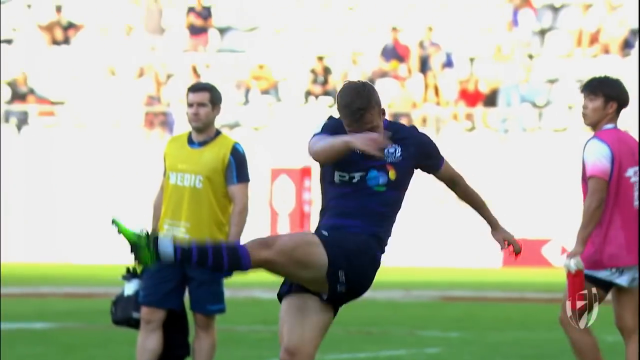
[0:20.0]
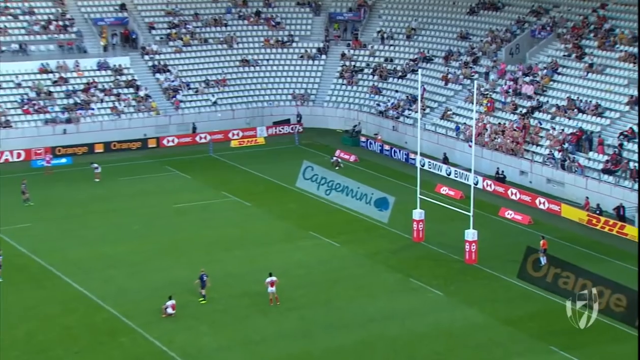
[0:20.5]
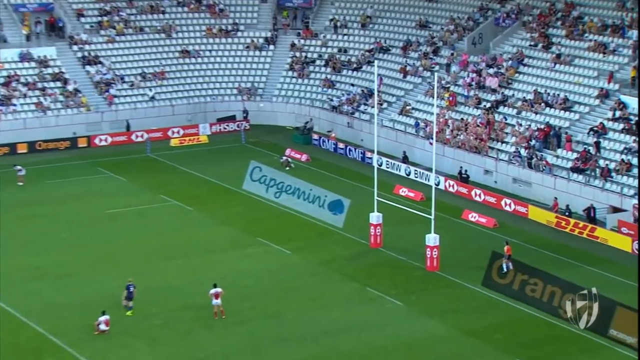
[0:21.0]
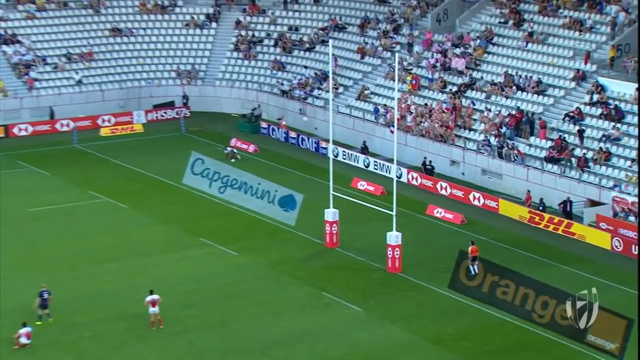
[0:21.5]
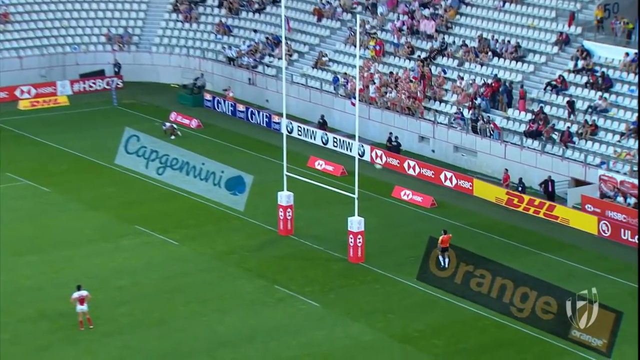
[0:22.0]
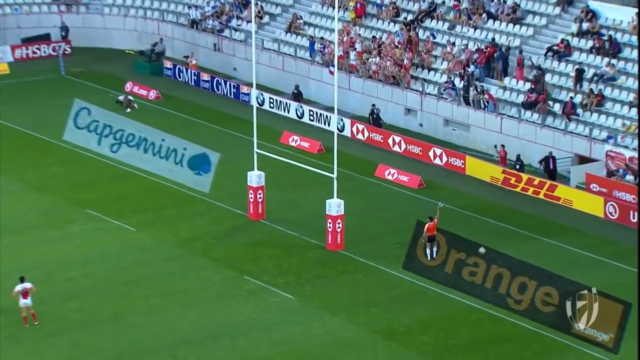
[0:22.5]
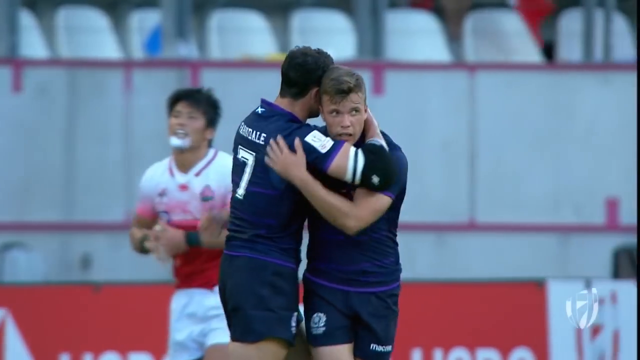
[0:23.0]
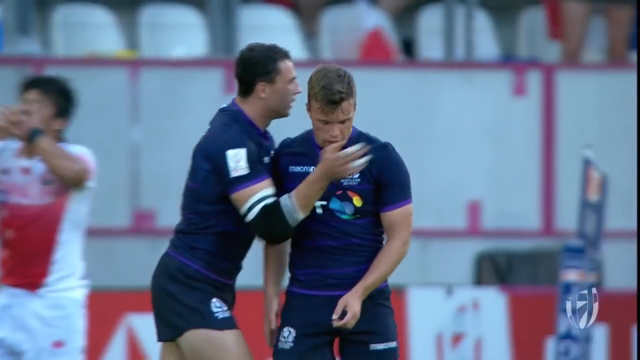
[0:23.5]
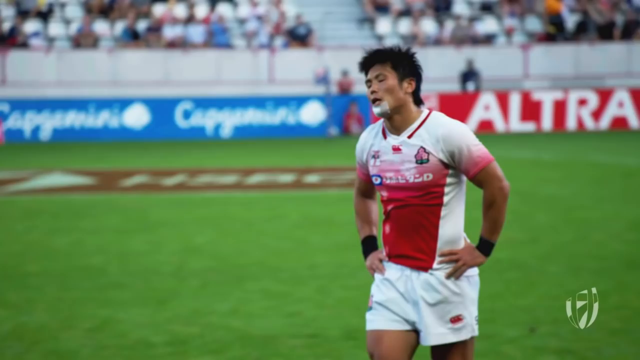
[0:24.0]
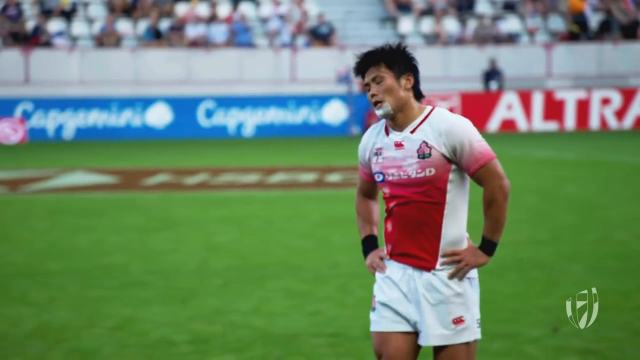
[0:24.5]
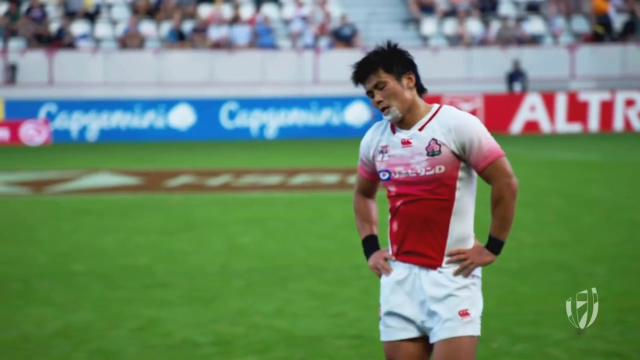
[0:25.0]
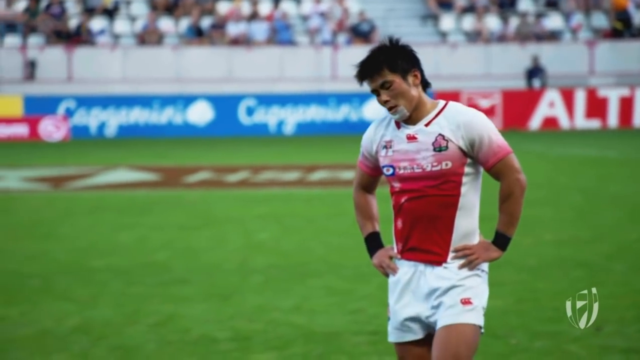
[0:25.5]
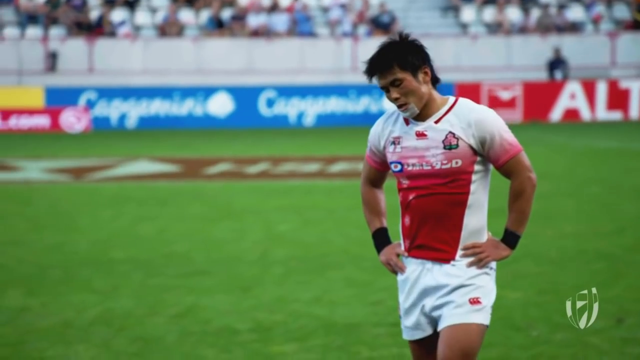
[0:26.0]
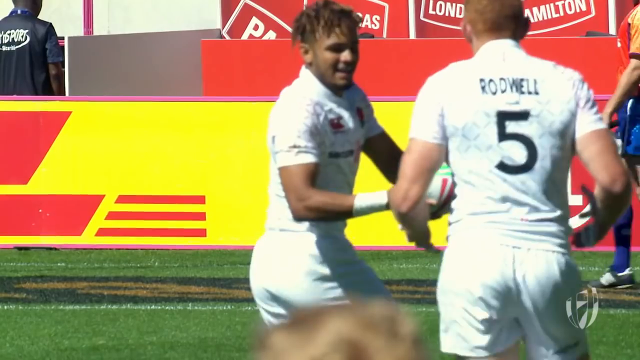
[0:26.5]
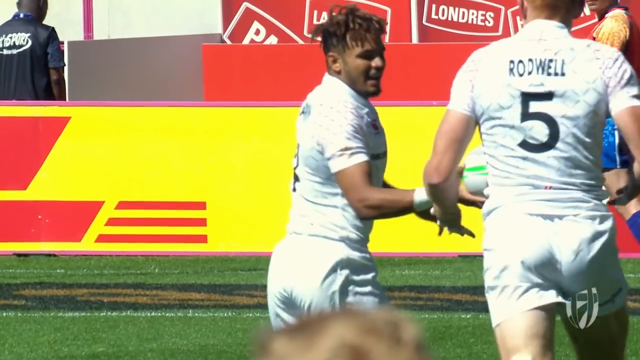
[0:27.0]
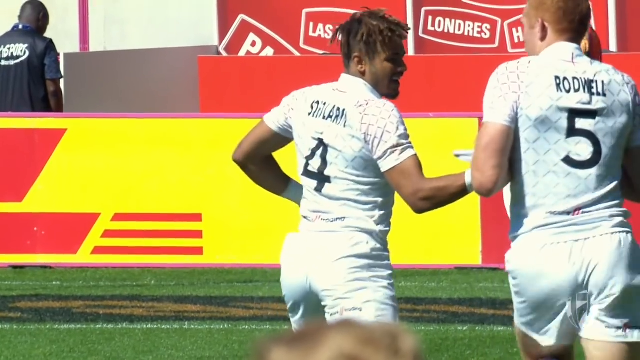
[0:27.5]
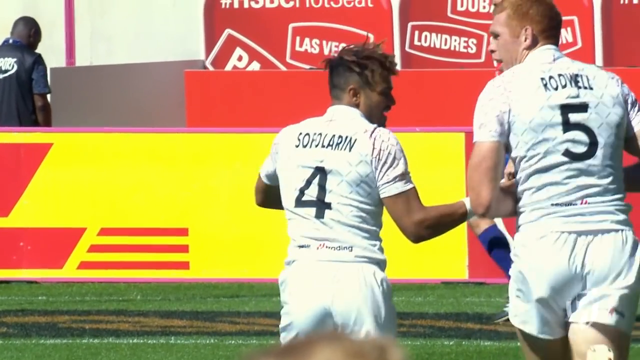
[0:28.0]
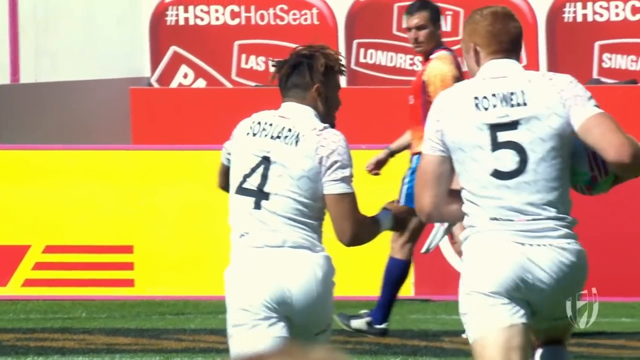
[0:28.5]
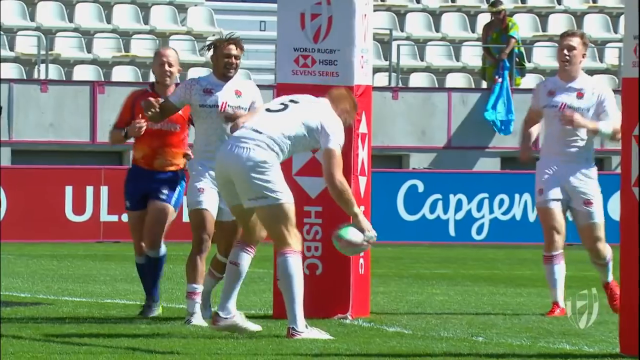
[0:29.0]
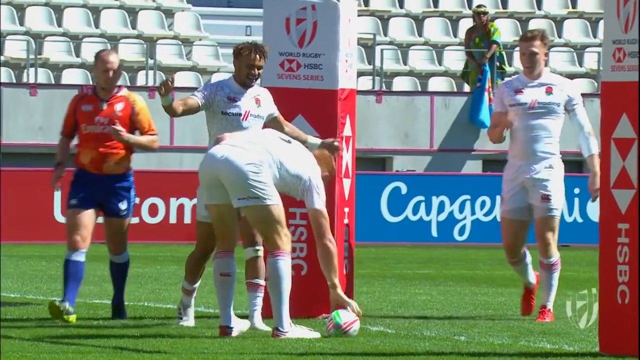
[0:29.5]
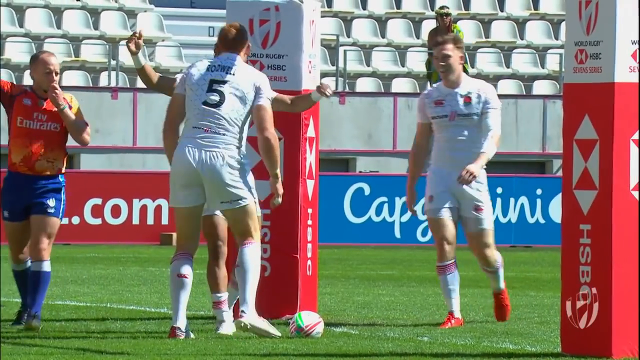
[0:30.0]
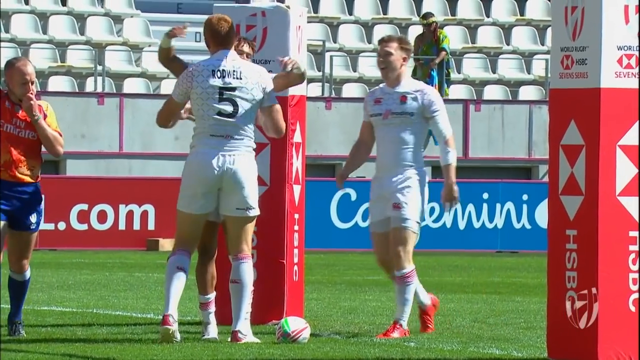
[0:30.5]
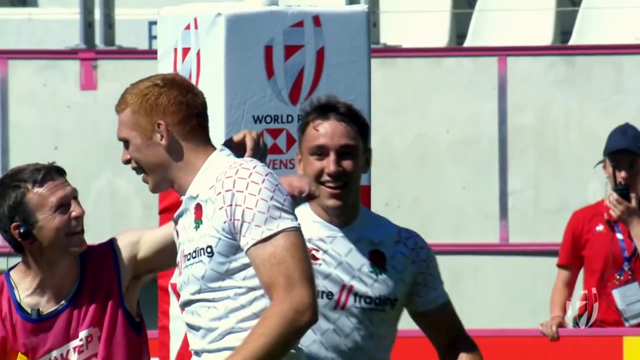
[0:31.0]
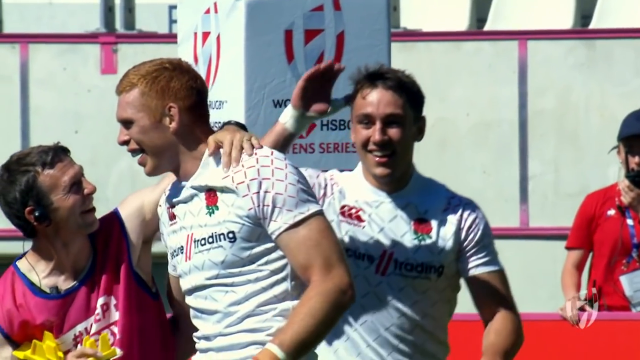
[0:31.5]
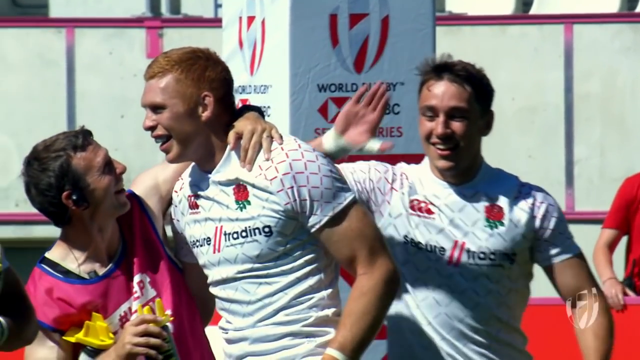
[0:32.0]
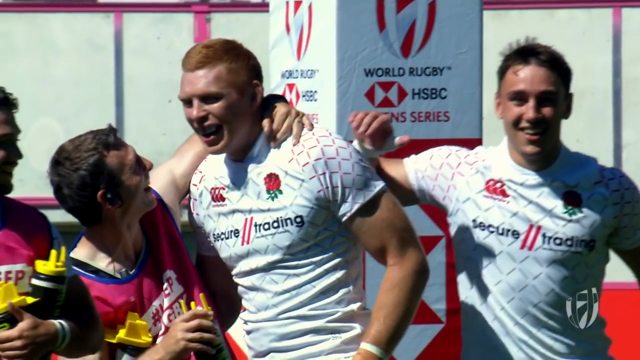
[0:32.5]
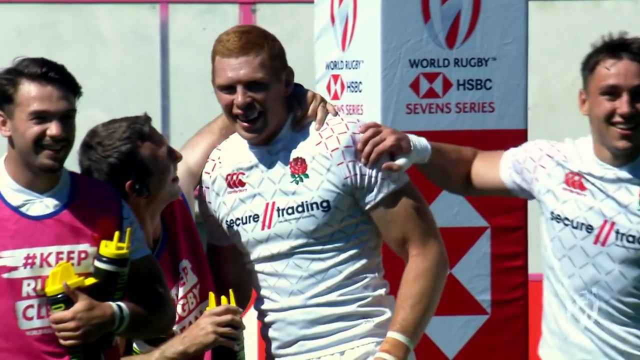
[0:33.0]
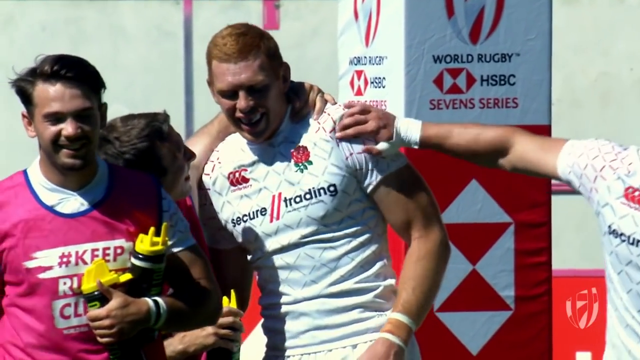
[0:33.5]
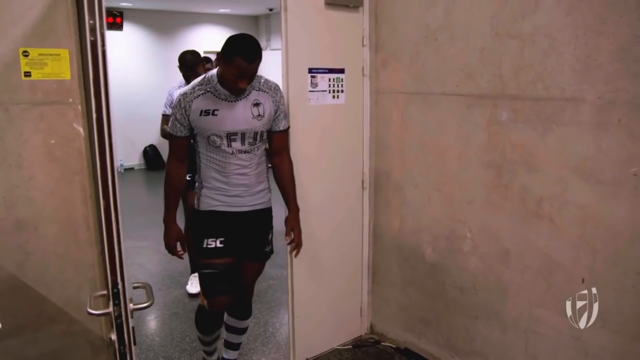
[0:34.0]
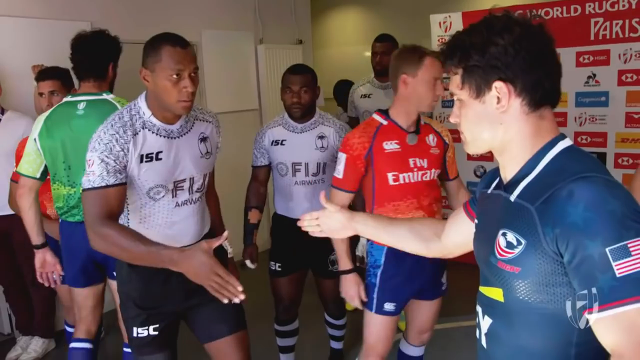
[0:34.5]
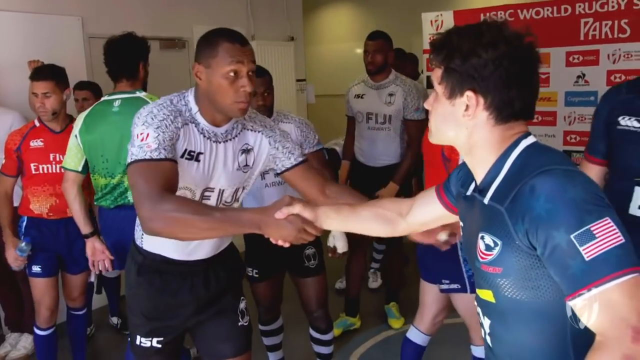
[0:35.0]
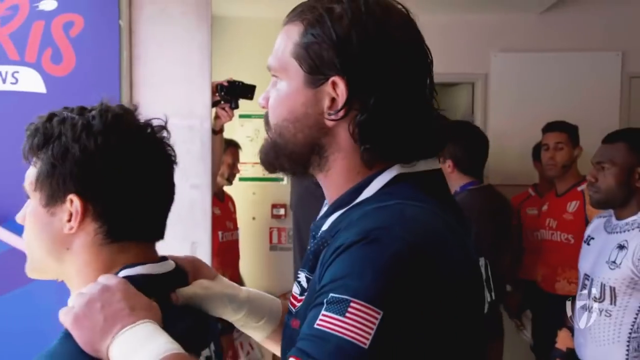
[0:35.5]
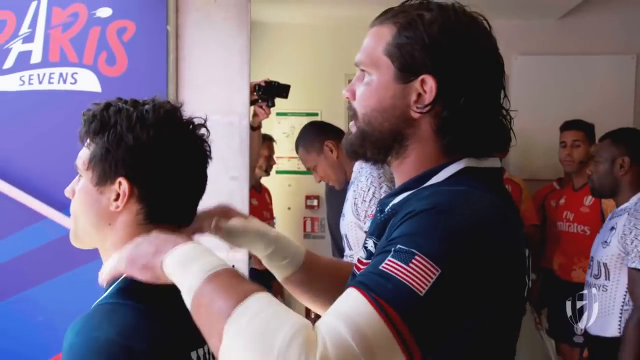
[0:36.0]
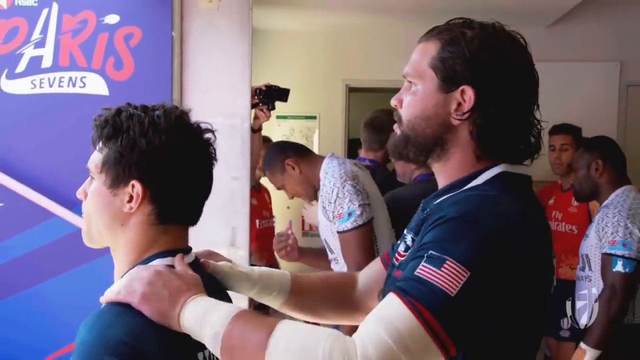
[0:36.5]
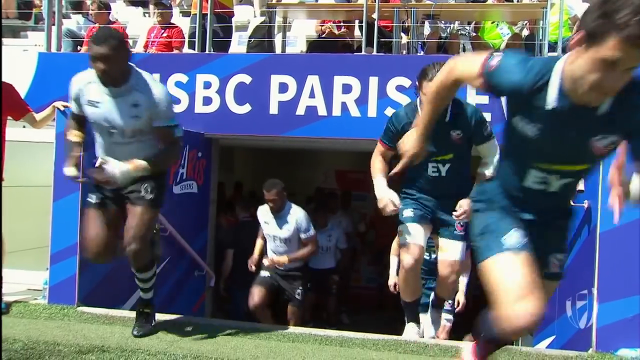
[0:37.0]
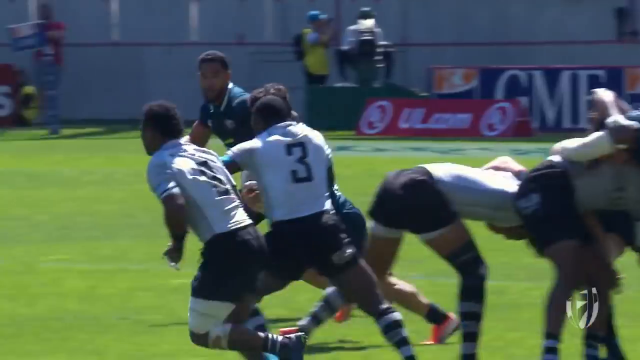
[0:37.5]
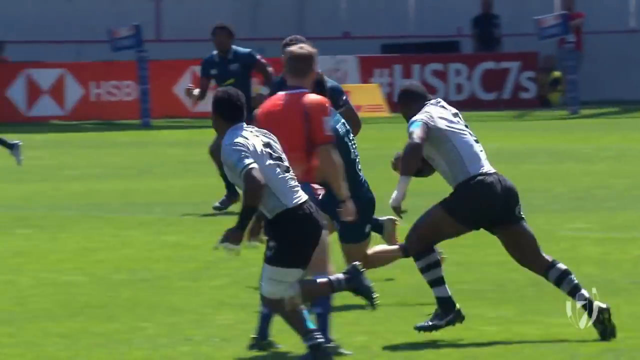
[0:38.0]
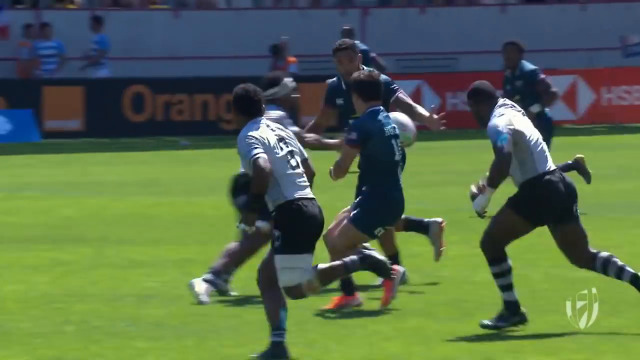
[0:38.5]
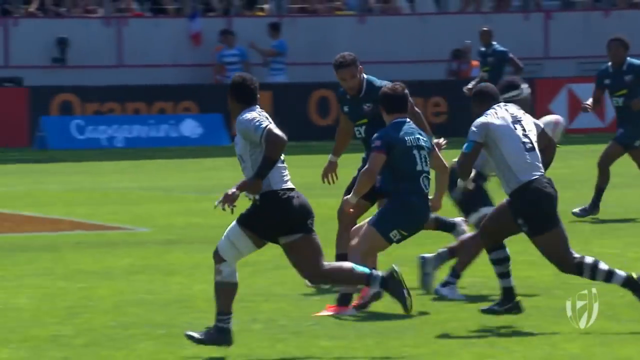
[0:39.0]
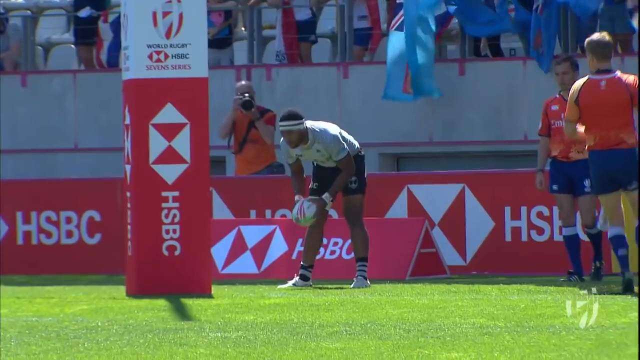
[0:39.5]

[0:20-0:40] Rugby game action continues, with men playing against each other: tackling, kicking the ball, sideline shots, and a stadium shot that looks about half full of people. Some shots are in slow motion. Some players look exasperated with their hands on their hips, while others celebrate. The shots appear to show different teams, not just the original two, so this may be a tournament. Players hug and celebrate, and some slide into the ground, diving to score. The venue looks like a professional rugby stadium, with green grass, lots of sponsorships and signage around the perimeter, and at one end a goal that looks almost like a football field goal. The montage moves from shot to shot of people celebrating or looking very sad, along with lots of active game shots. A team in blue and white runs out of a tunnel, with no signage or logos visible. The setting appears to be Paris and some kind of rugby tournament.